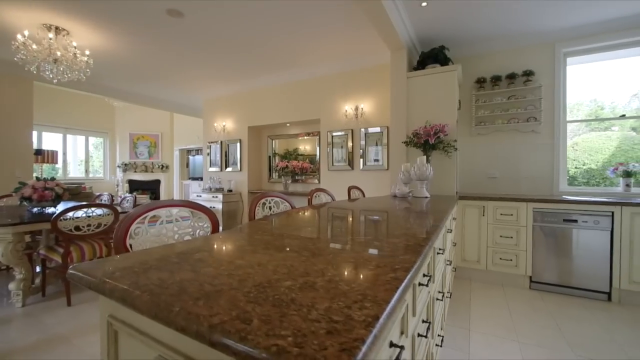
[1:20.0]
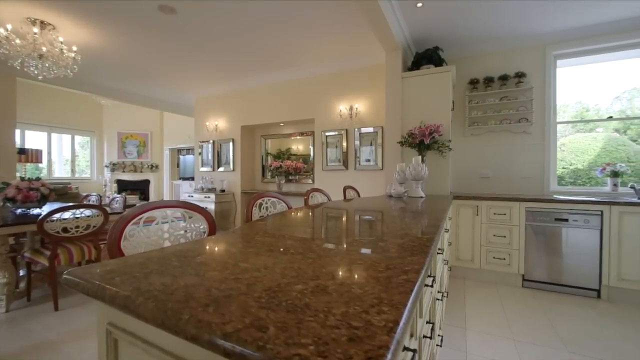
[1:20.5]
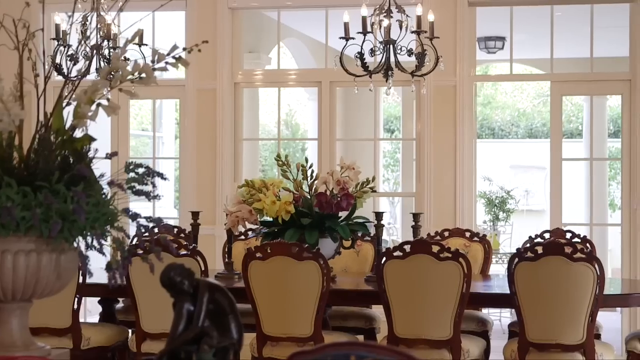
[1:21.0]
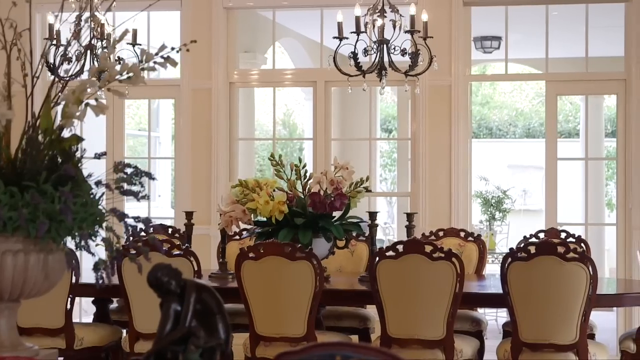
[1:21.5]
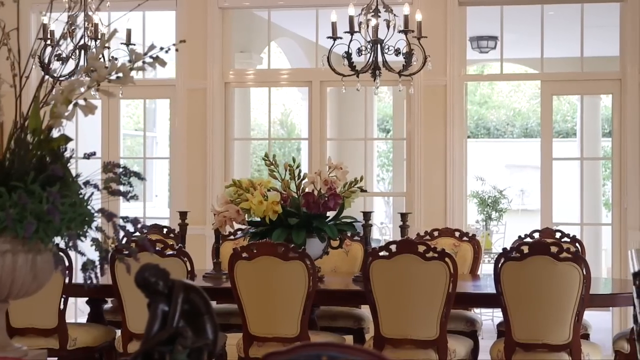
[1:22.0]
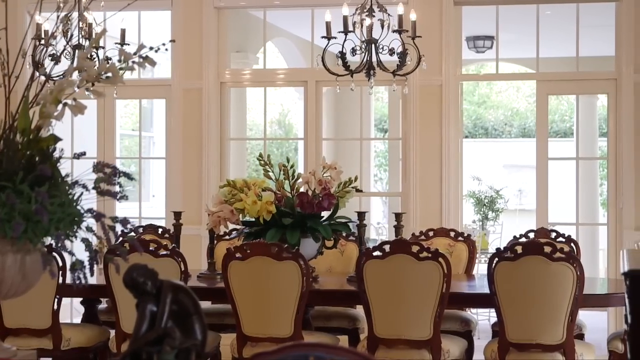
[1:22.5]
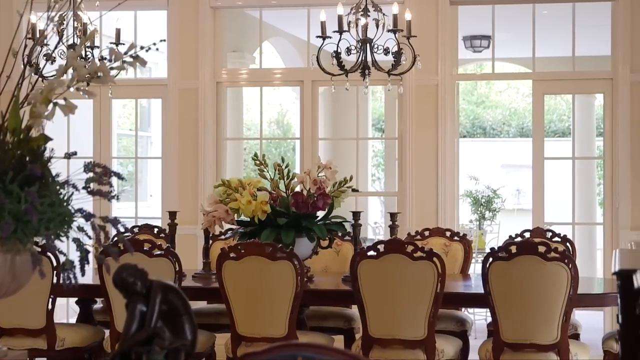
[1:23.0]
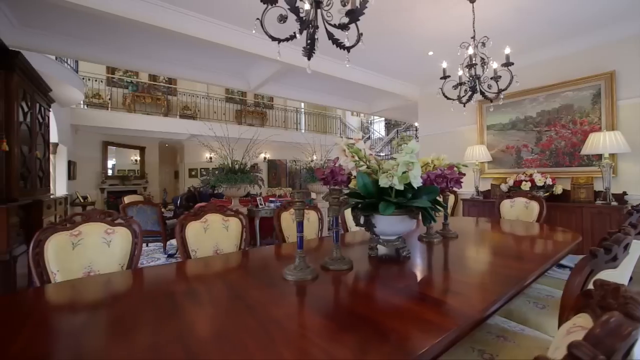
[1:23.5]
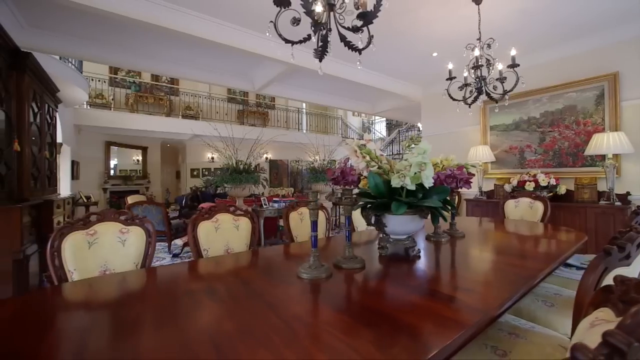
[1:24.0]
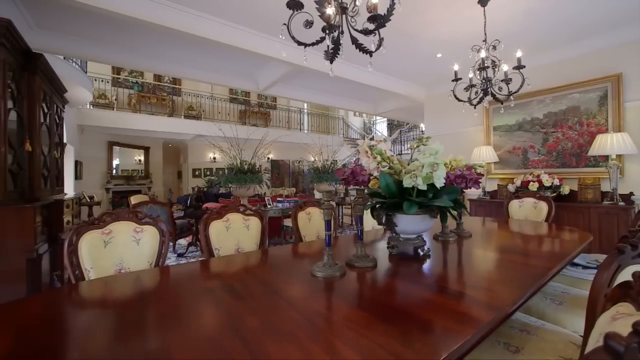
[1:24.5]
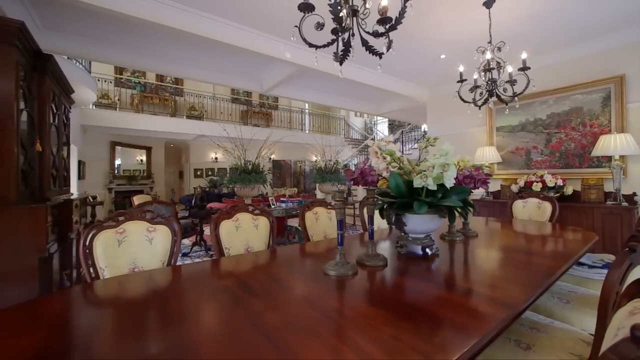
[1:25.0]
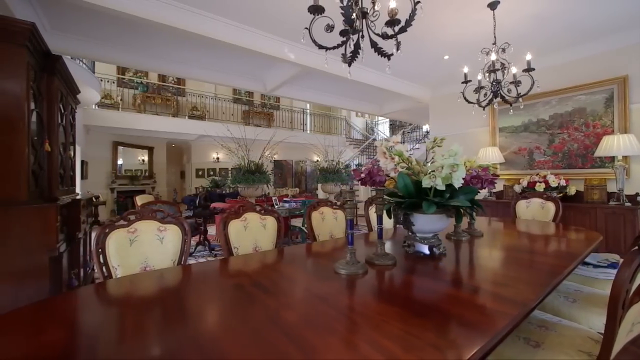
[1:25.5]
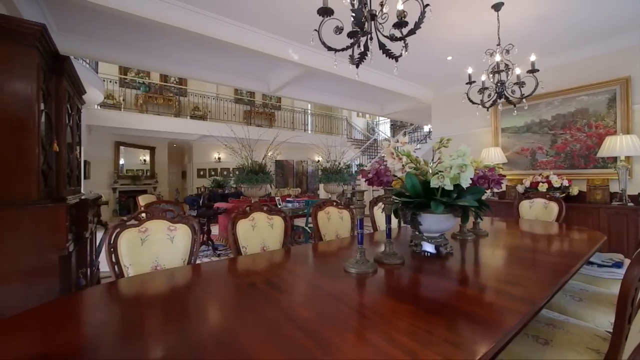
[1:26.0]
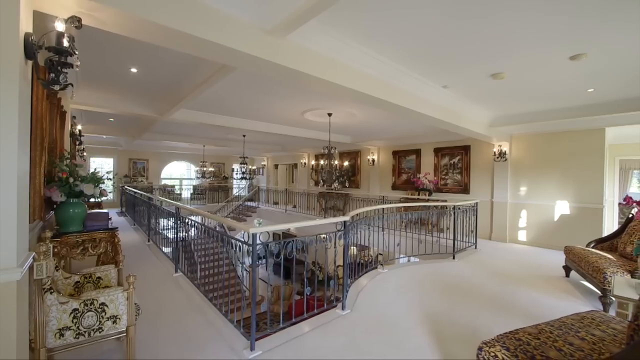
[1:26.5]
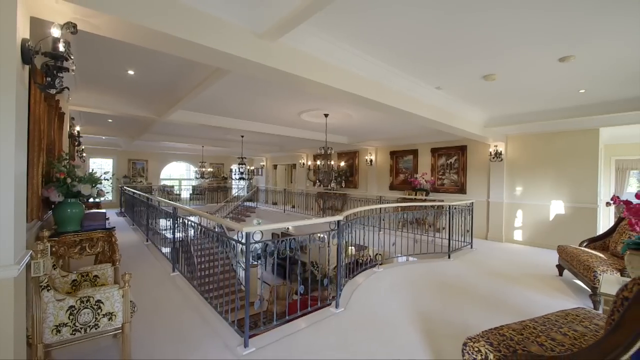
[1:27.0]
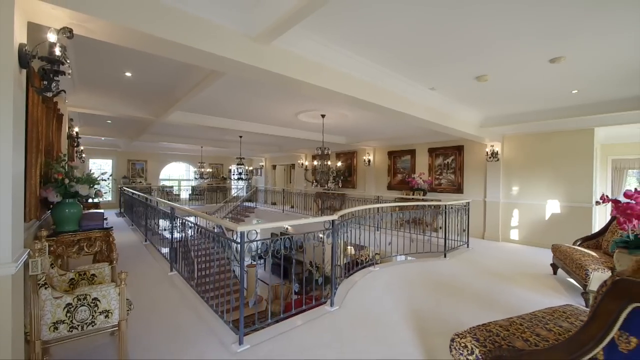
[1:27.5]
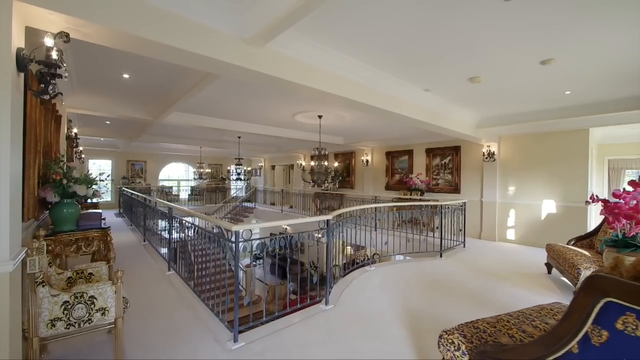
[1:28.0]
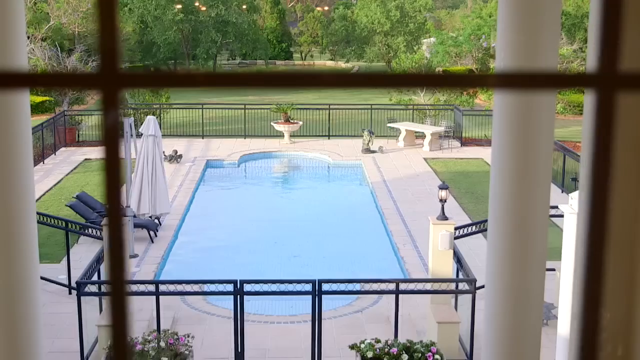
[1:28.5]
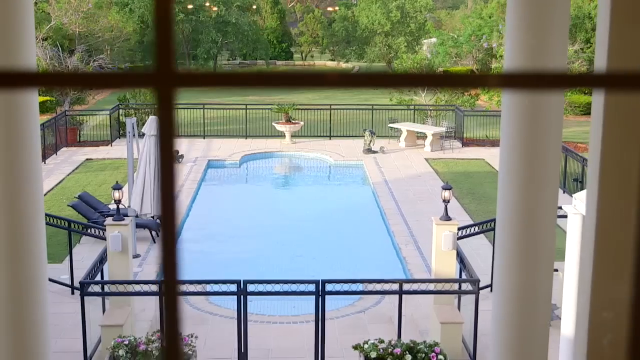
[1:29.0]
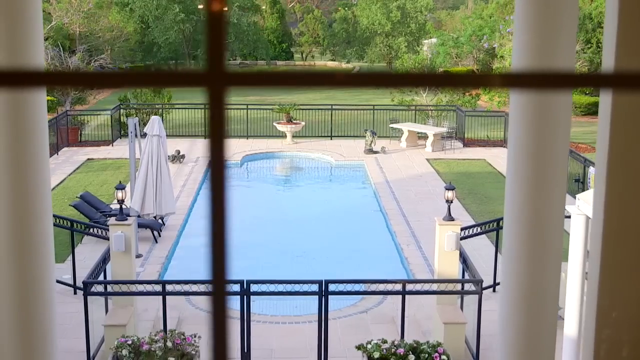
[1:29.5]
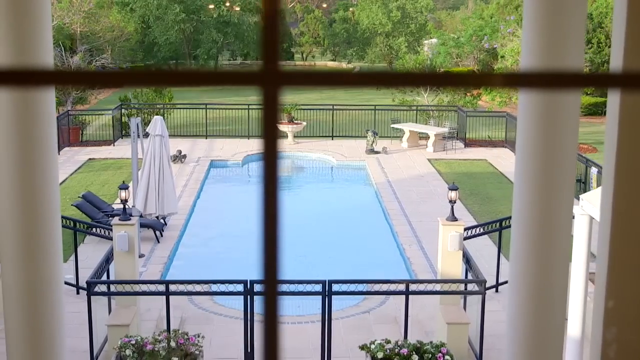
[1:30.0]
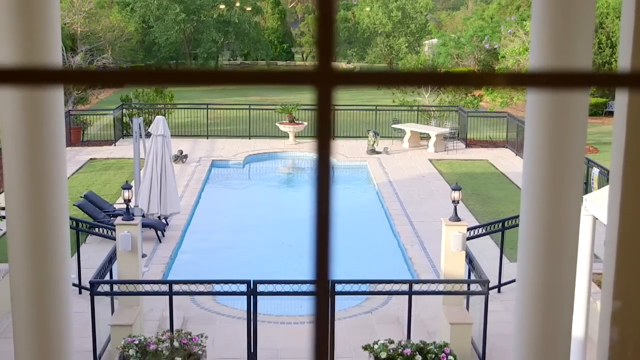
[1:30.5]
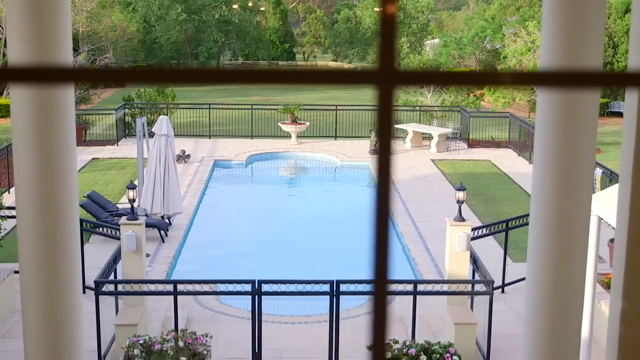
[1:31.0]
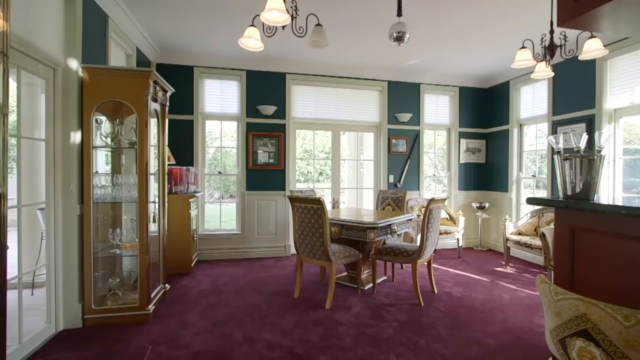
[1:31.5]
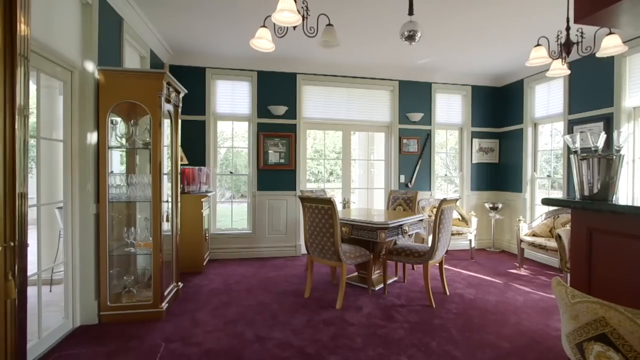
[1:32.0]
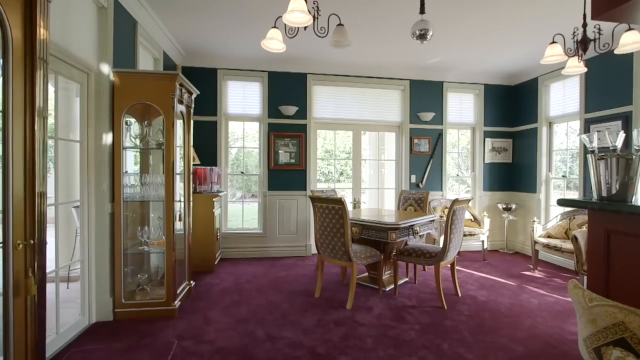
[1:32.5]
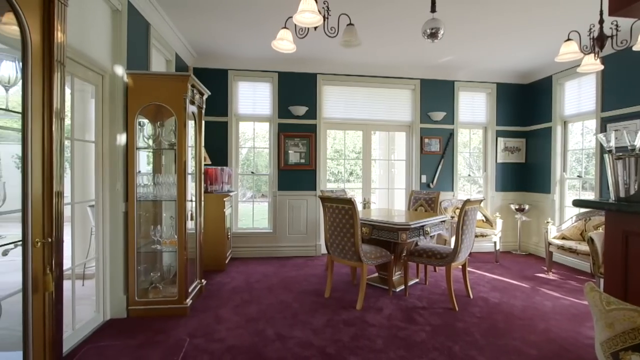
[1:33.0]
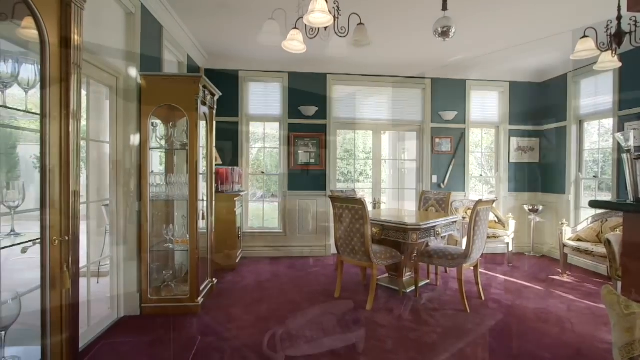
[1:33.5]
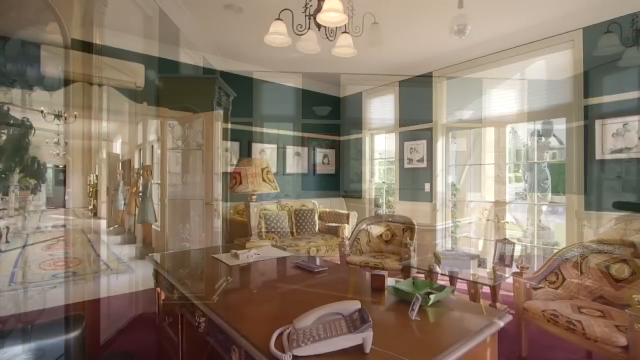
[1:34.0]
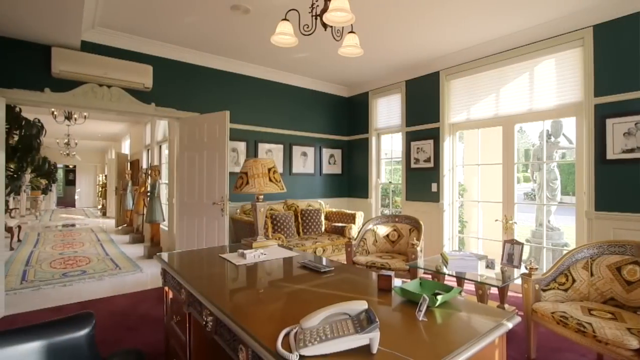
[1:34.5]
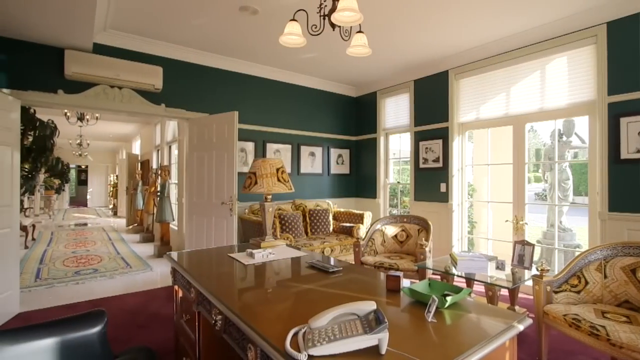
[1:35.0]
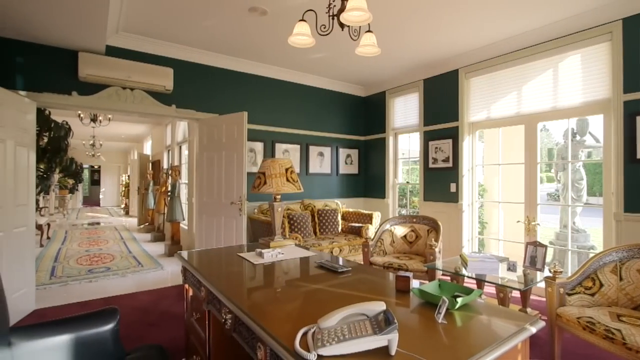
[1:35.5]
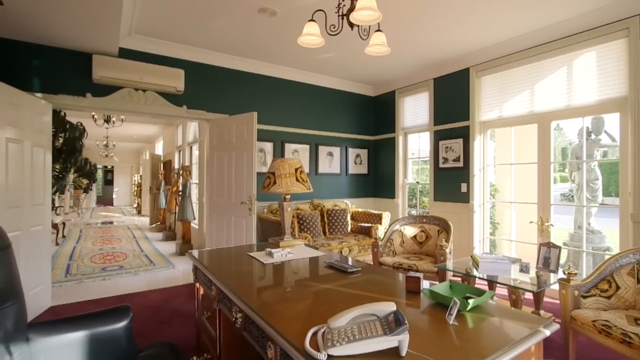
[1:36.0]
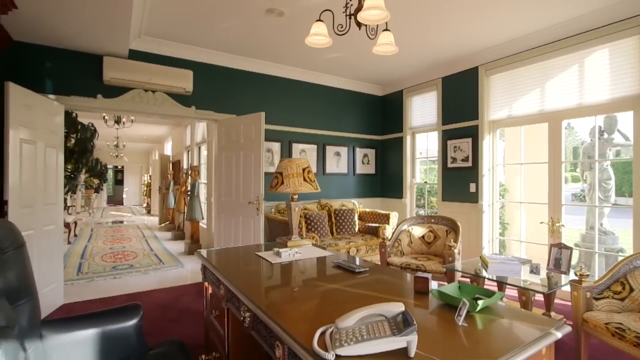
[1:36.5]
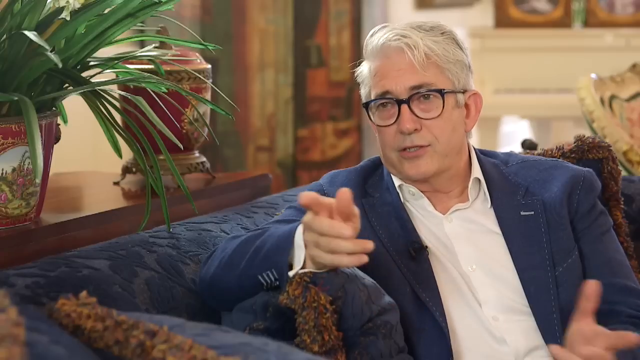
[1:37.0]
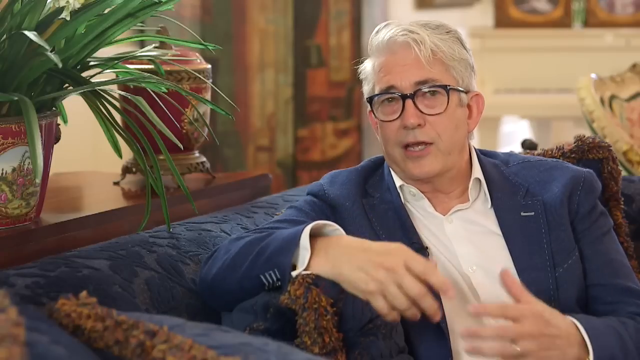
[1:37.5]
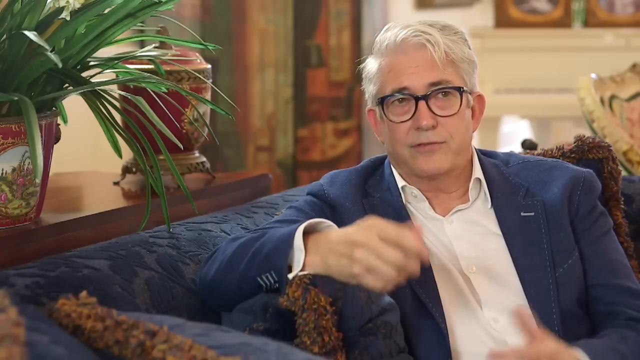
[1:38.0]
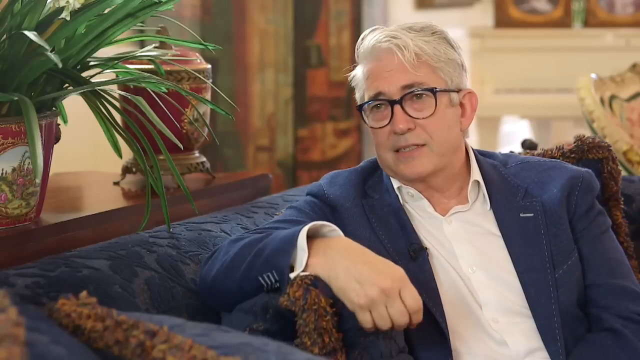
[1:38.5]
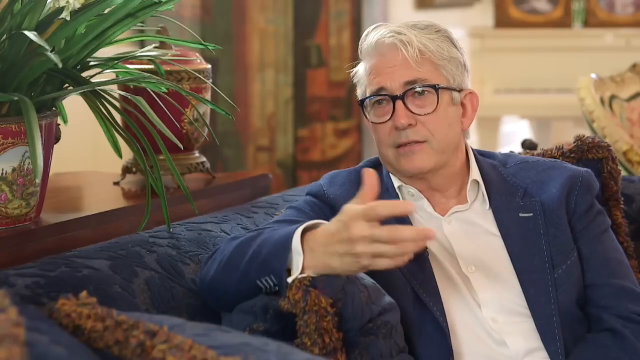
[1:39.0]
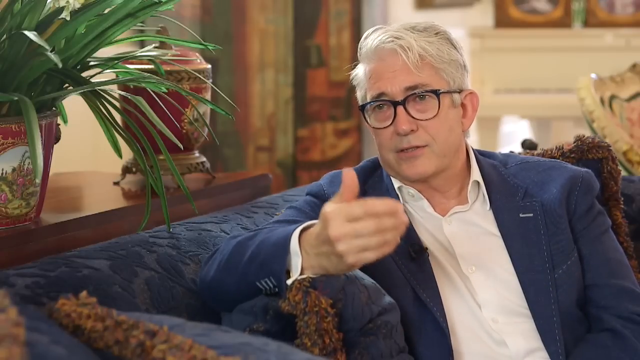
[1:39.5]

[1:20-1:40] A wooden table in the kitchen is seen from above, with red chairs around it and a chandelier hanging above. The windows or walls seem to be made of glass, and natural light comes into the kitchen. The table with about ten wooden chairs is shown in a closer view, with about two chandeliers hanging above it and a vase with flowers on top. The video then shows the second floor, where barricades protect an empty space. From the second floor, the camera shows the swimming pool outside with a green field beyond it; next to the pool there seem to be deck chairs and umbrellas, and it looks like a sunny day. The camera goes back inside to show more furniture, mostly tables with chairs around them. The interior walls in this room seem to be green, with white chandeliers hanging and two doors wide open. The old white man with white hair and glasses is shown again, sitting on a couch with his right hand on top of the couch, using his hands as he talks.